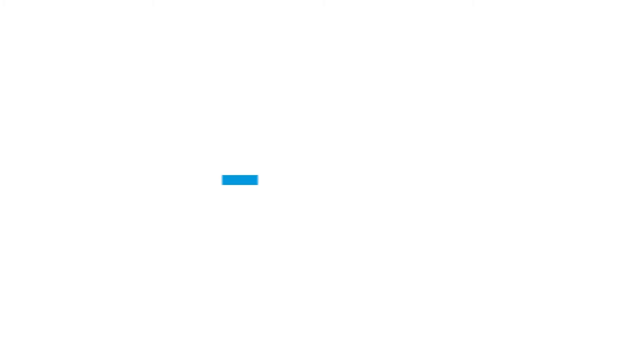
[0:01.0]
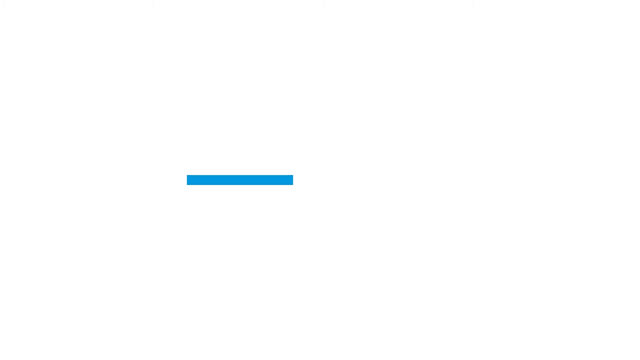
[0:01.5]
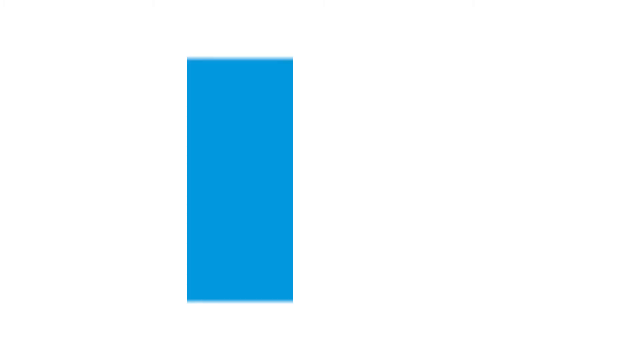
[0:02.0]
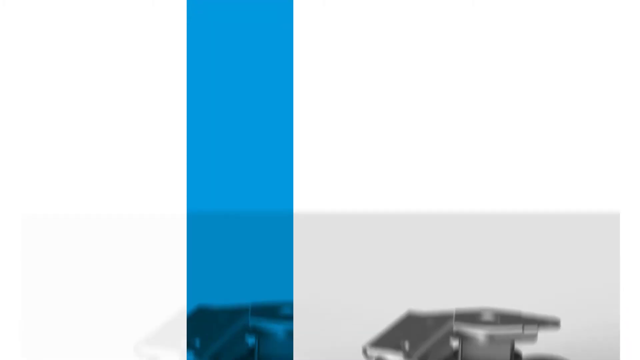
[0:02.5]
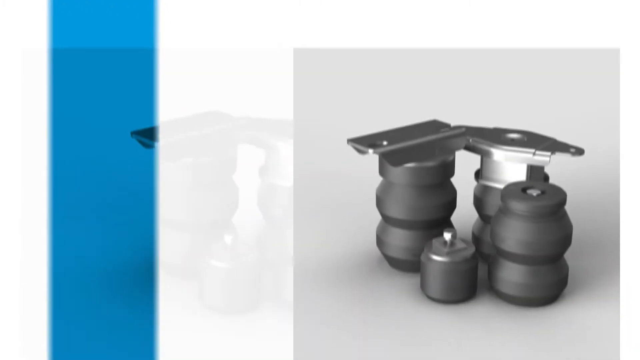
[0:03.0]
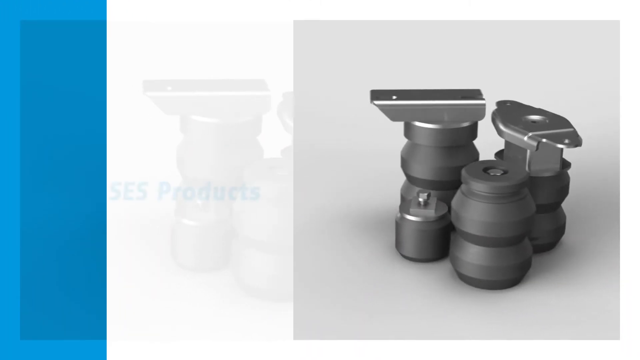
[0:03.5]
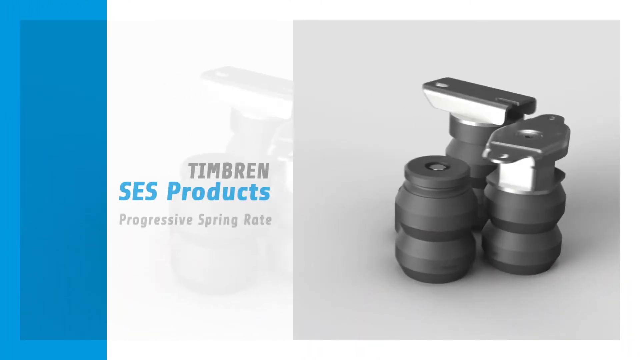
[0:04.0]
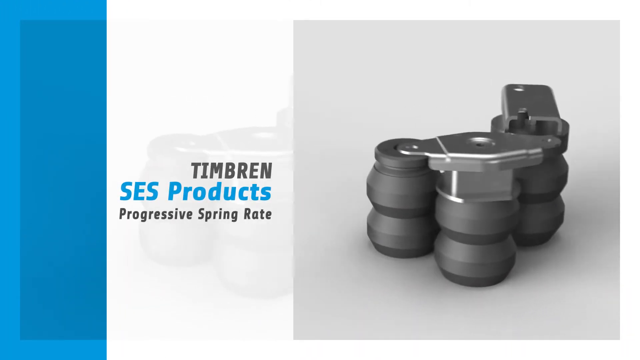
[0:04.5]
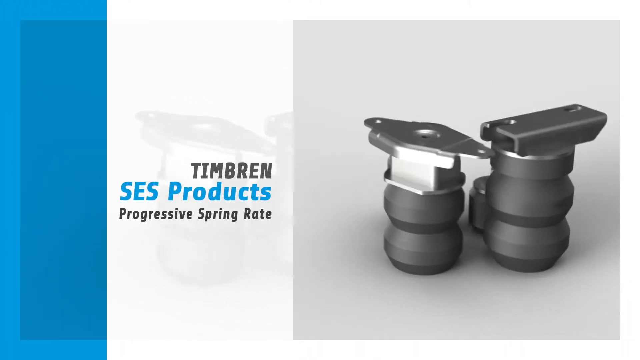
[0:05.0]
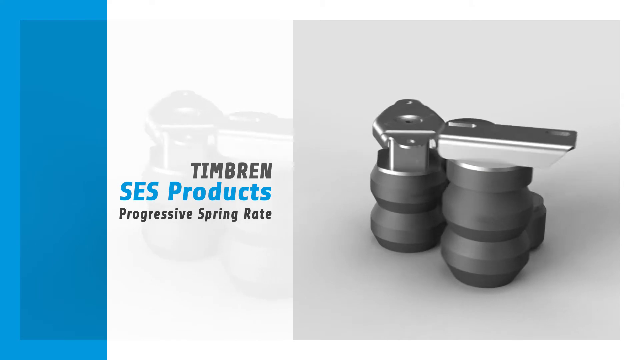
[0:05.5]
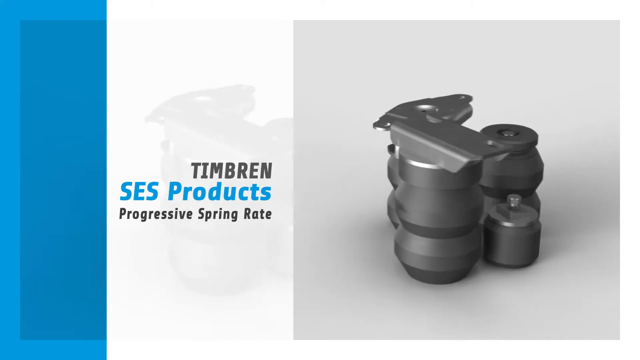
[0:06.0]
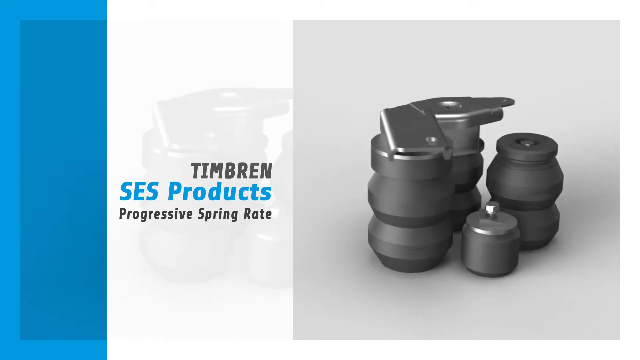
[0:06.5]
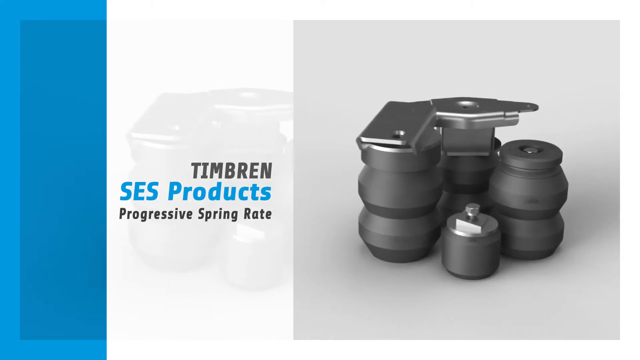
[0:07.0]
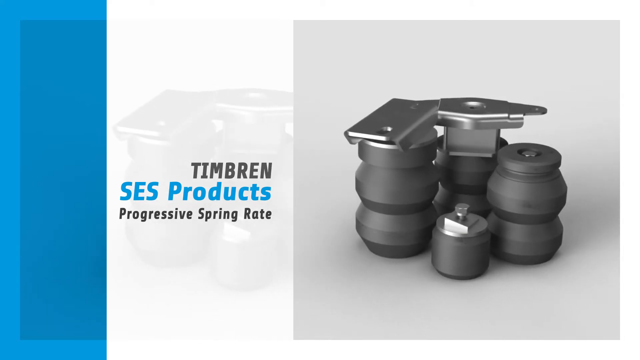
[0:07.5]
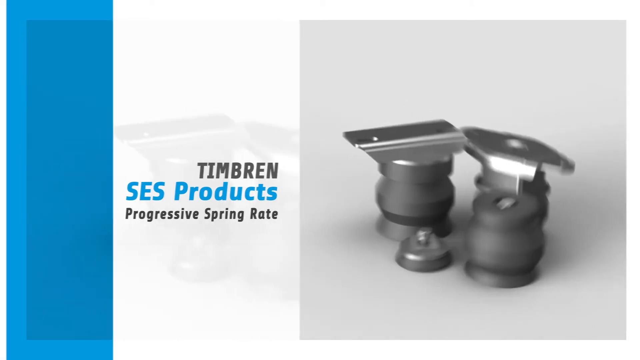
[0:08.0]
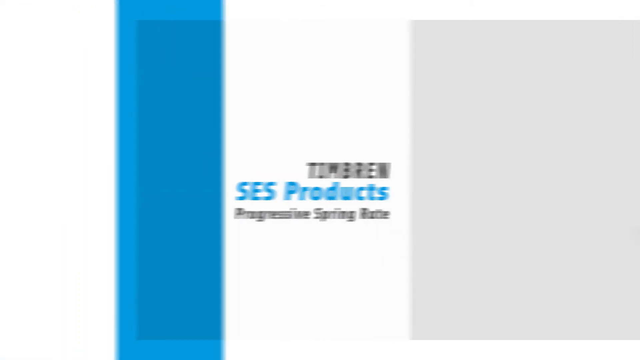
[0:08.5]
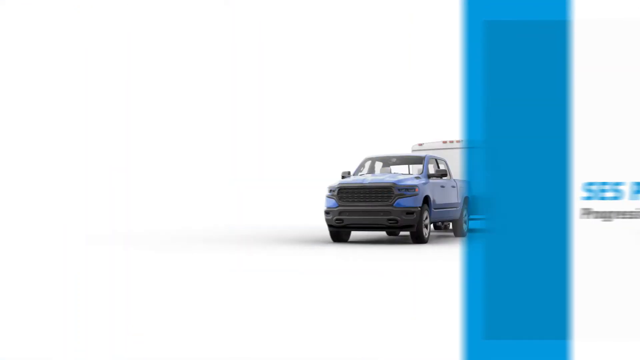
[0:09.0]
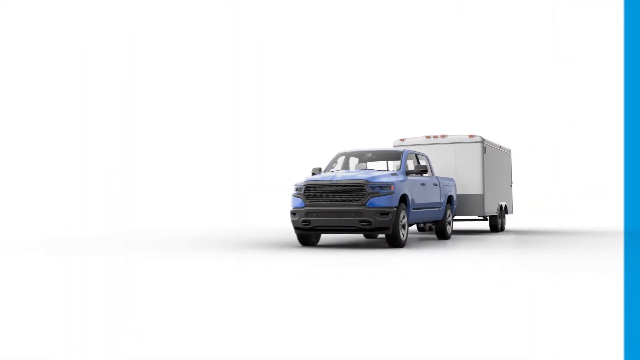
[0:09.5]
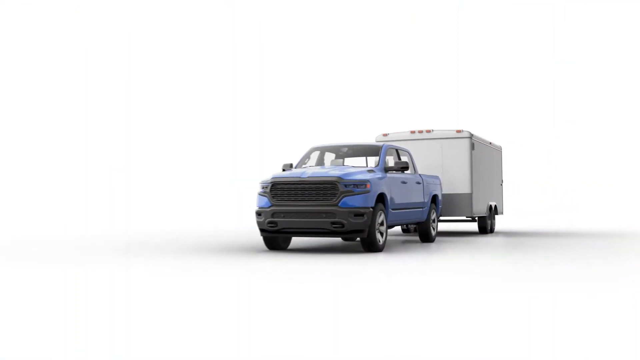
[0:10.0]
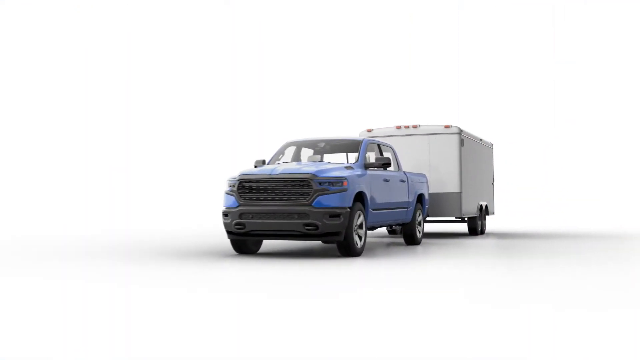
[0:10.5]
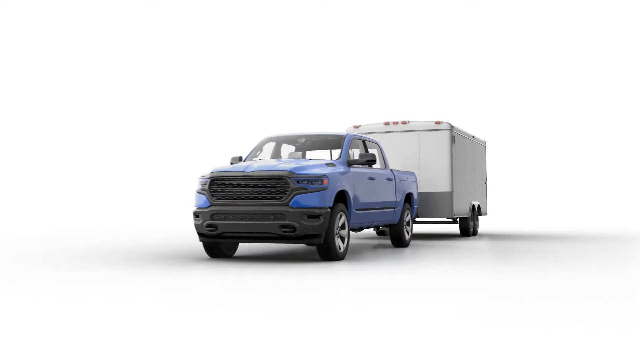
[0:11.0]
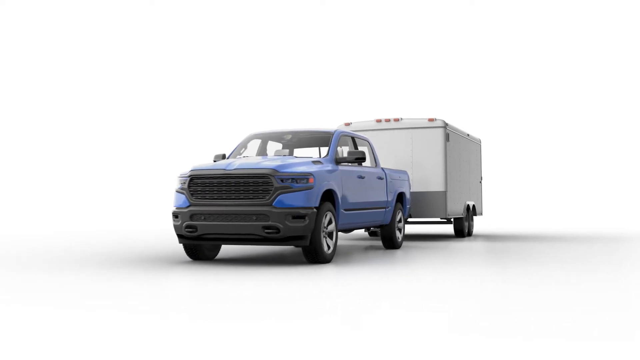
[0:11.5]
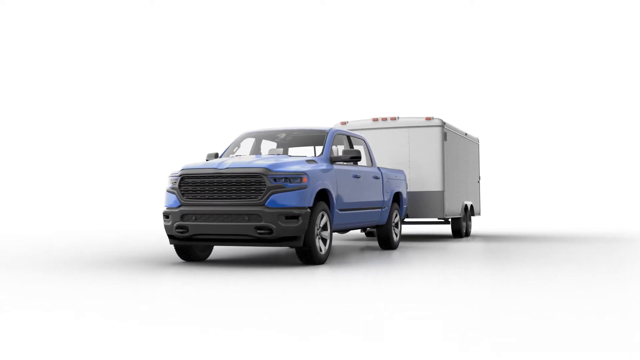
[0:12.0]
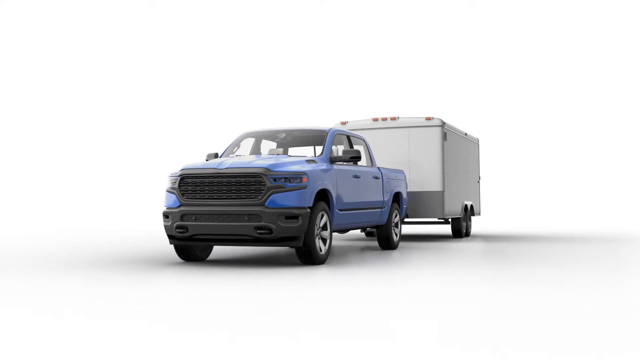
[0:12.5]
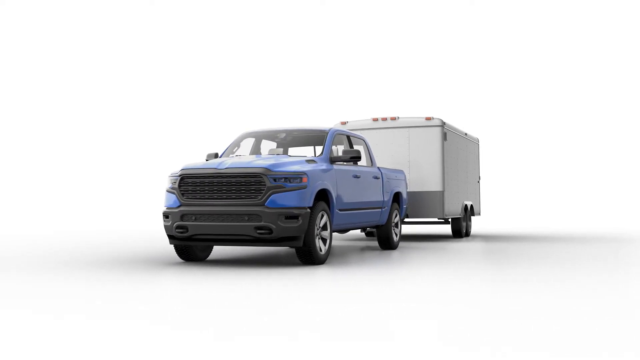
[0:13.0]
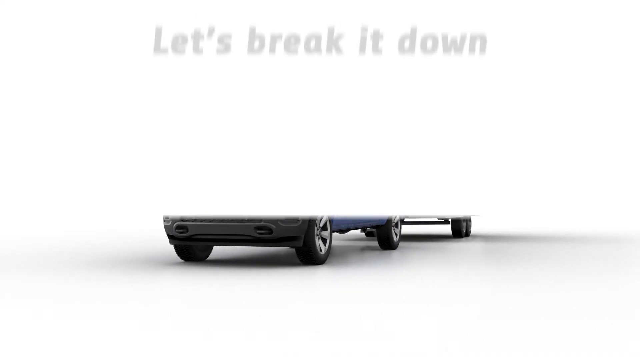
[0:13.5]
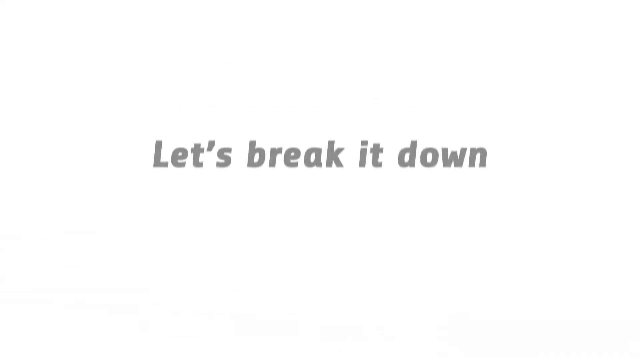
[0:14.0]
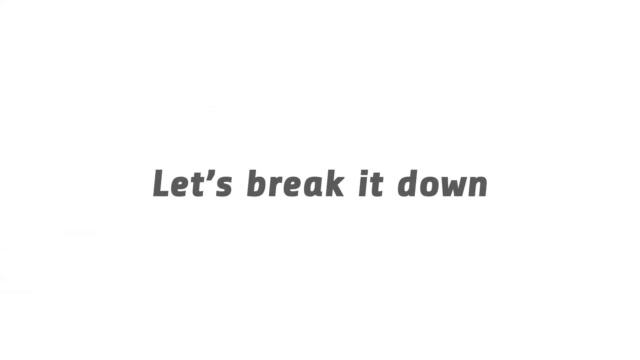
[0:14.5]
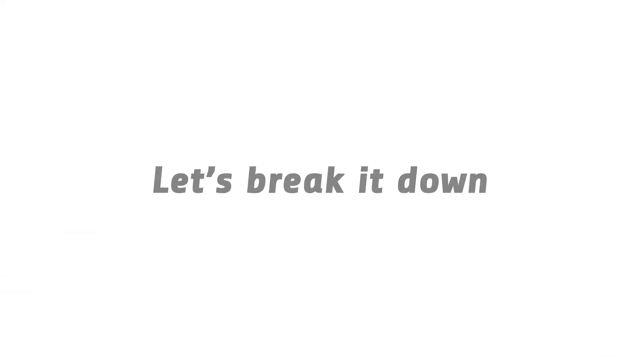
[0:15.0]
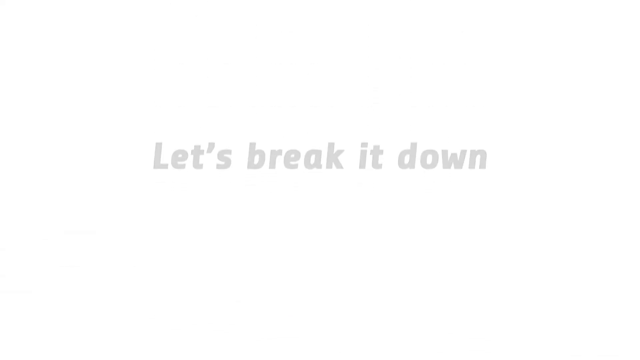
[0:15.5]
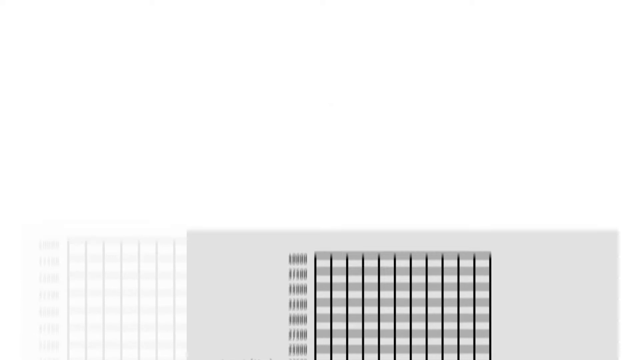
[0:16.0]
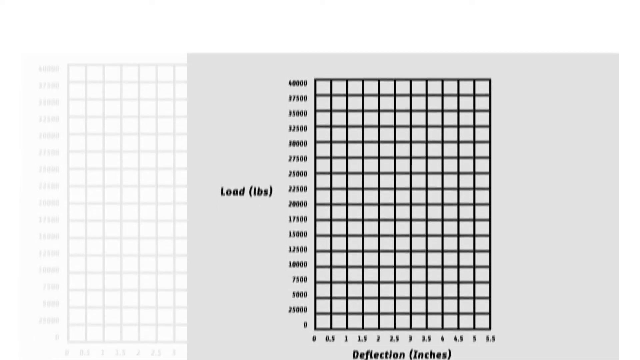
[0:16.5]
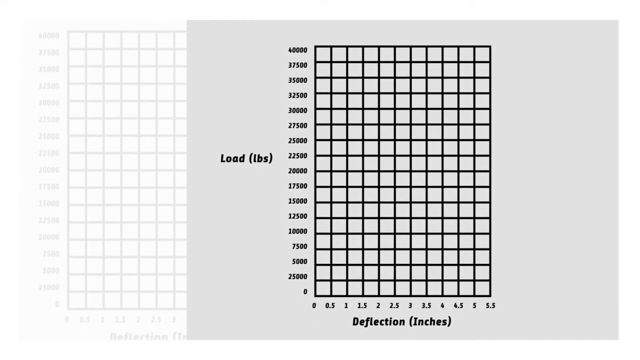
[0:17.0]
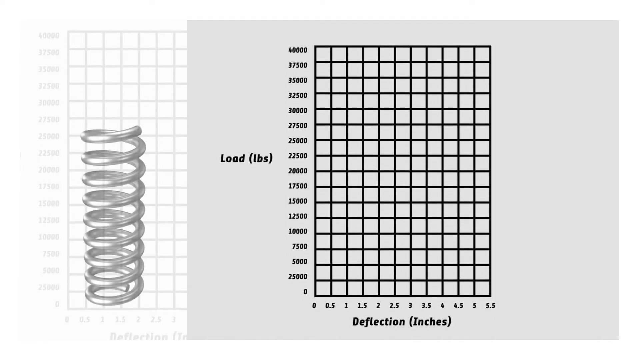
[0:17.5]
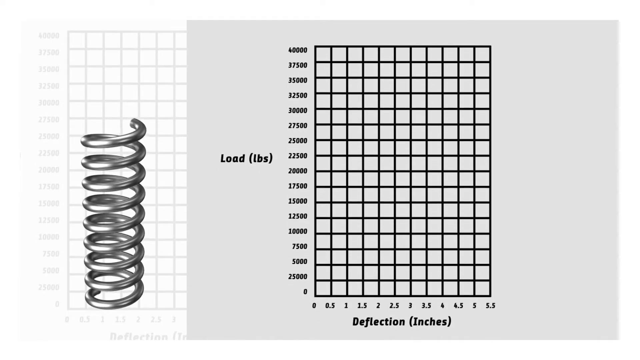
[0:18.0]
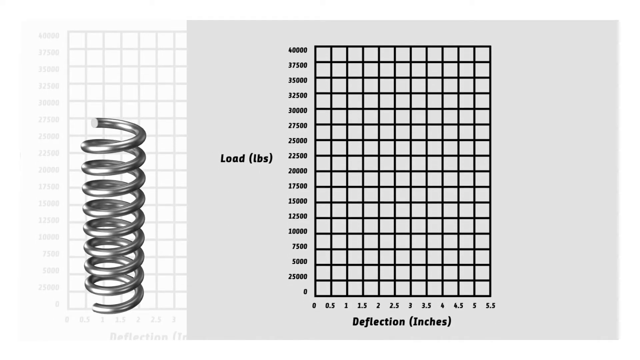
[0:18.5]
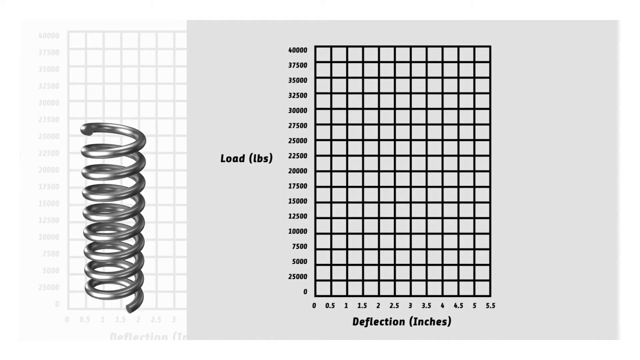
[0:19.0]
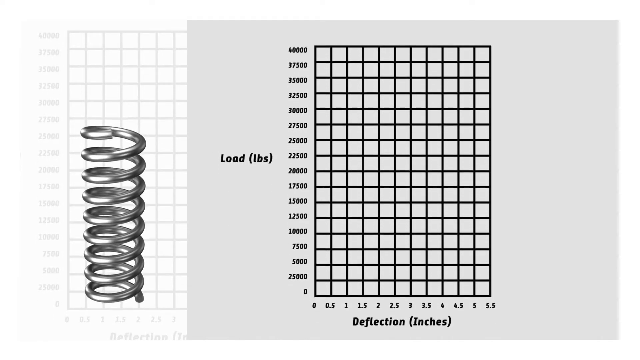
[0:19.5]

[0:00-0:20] The video starts with a white screen, then a blue bar comes up, and out of it come some vehicle parts that look like they are for leveling a trailer. They are part of the suspension, either on the truck or the trailer, and look like big squishy bags with silver brackets on top. They turn around in circles. Text appears on the left reading "Timbren SCS Products progressive spring rate." The parts keep turning, shown from different angles, and the view swipes back toward the right. A blue pickup truck comes through pulling a white box trailer. The trailer comes to a stop along with the truck, then text comes down and takes over the screen, reading "let's break it down." On the left side a graph appears, with "Load" in pounds on its left side and "Deflection" in inches along the bottom. On the right side a spring appears, curling and swirling, kind of just spinning in place.